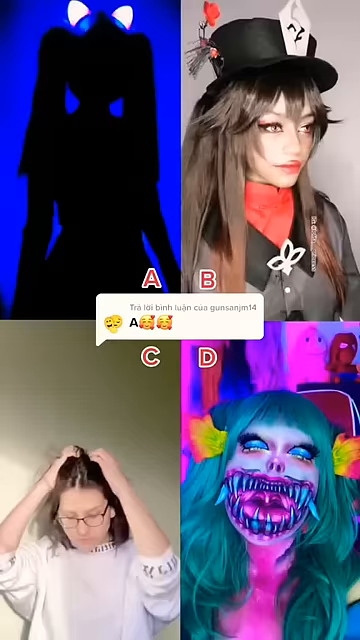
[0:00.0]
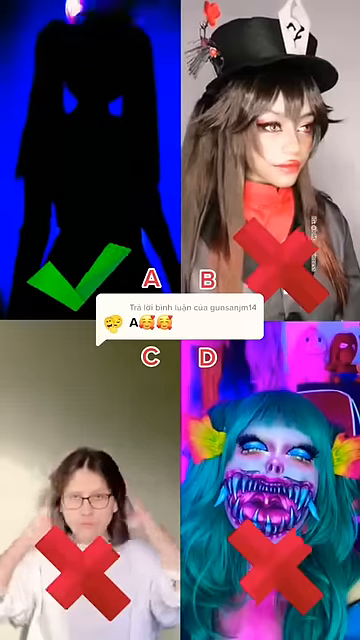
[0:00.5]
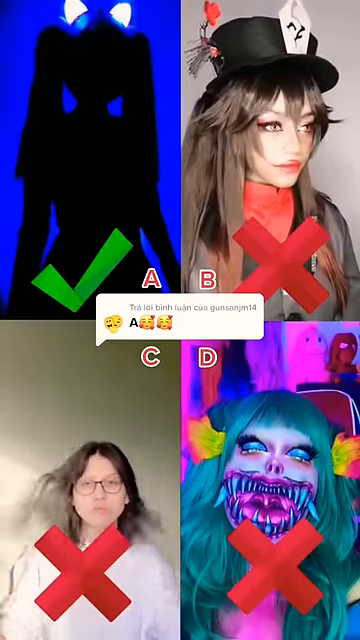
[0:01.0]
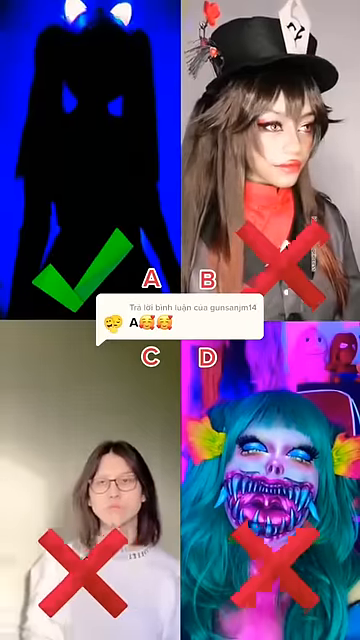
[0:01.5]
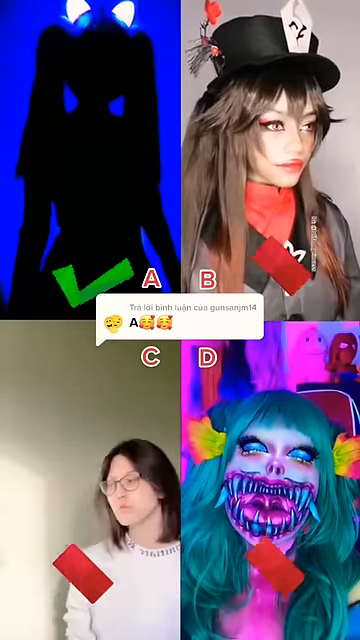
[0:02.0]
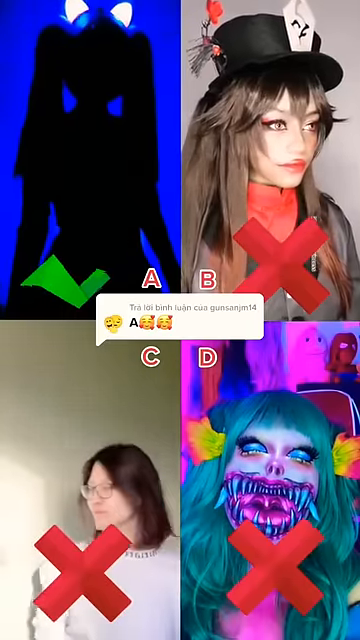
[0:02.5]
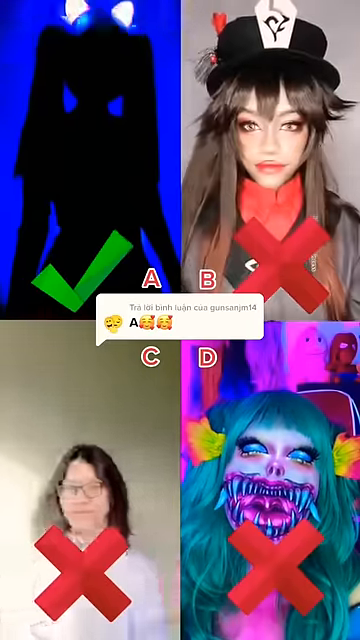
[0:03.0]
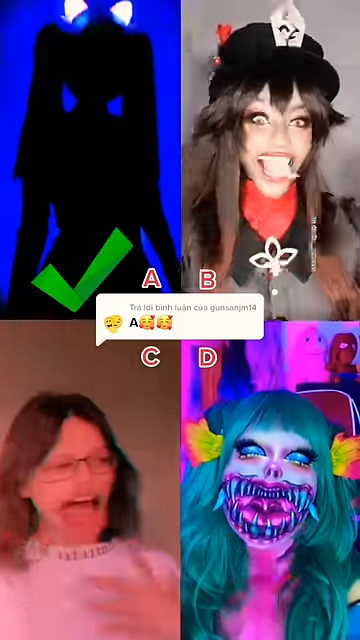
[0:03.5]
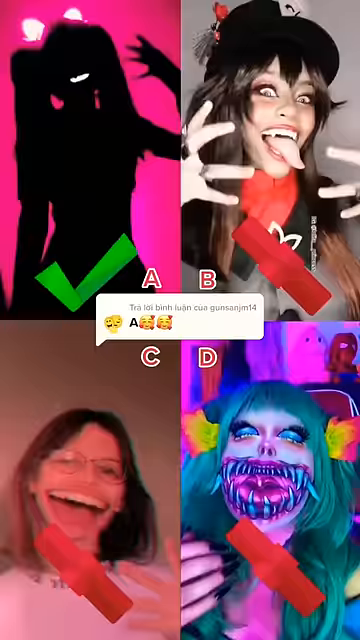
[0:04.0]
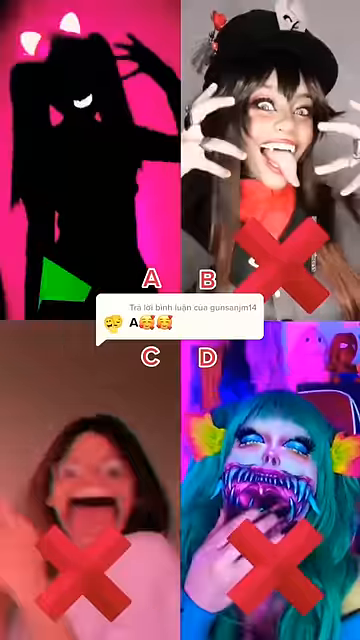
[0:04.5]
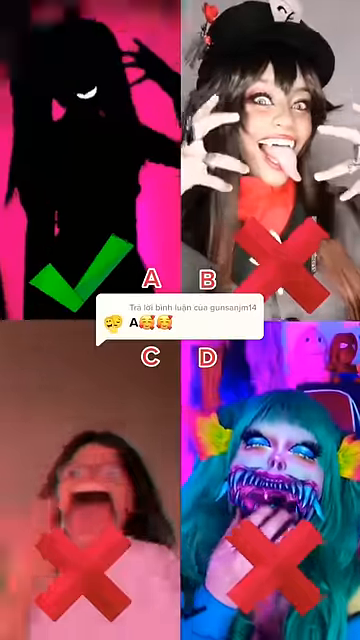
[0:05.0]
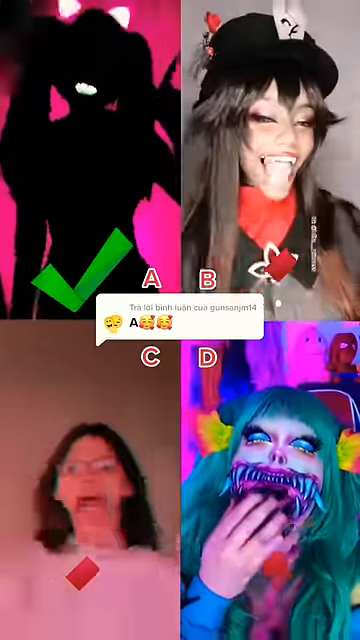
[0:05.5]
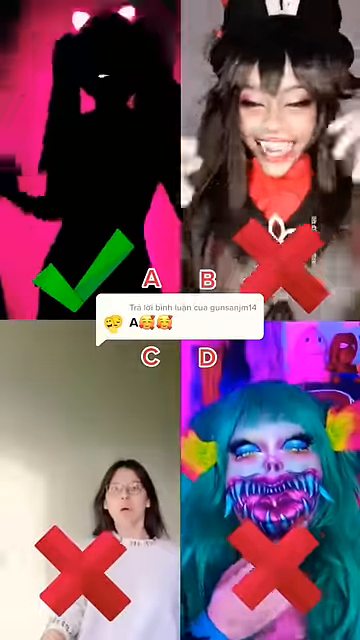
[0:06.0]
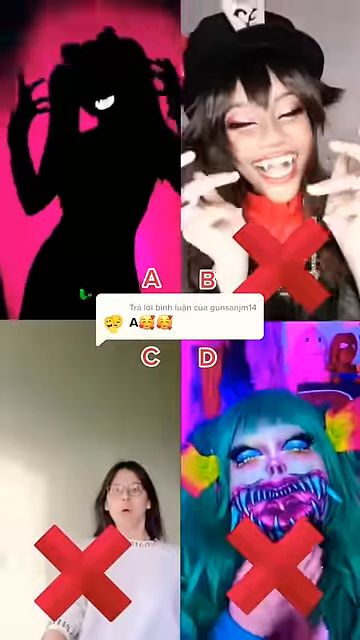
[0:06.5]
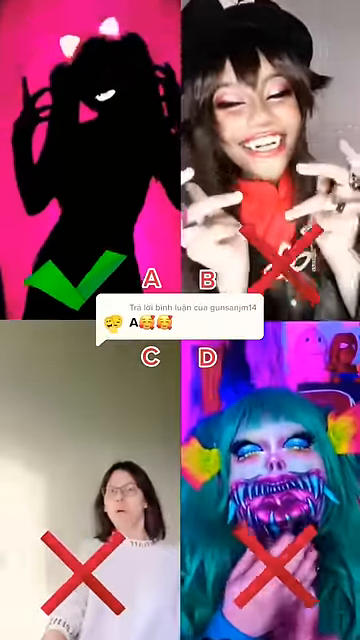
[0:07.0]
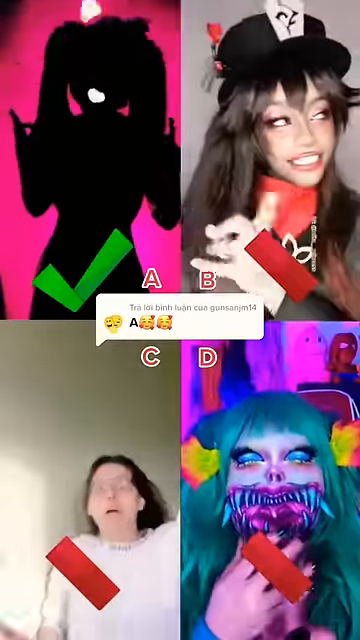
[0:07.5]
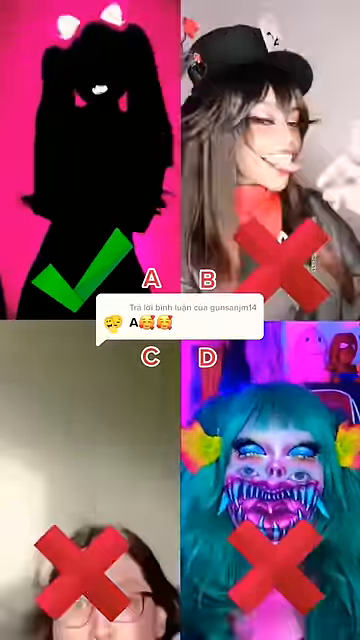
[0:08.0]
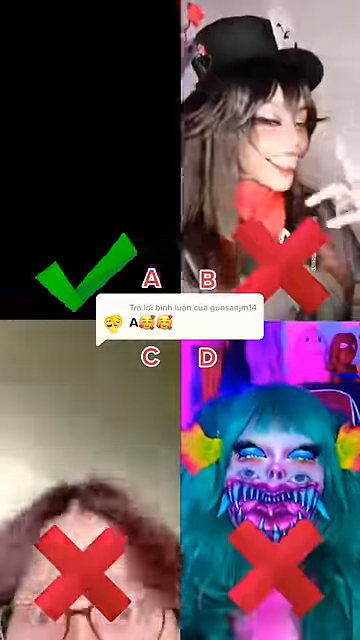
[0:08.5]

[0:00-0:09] Four people, or perhaps four things, appear on screen in a vertical phone-style format, so it looks like a YouTube short. In the top left is someone in cosplay with very long twin tails, making a really evil expression. Her left hand is raised kind of toward her face, while her other hand is kind of down and toward her. She wears a lit-up bow on her head. Only her overall body features and her mouth are visible; the mouth looks like a closed, clenched-teeth grin. In the top right, a lady is fully visible, wearing a black top hat, with a very long tongue and vampire-like teeth; there is an X below her. In the bottom left, a girl transitions from a normal-looking girl to a really bloated-out girl, then to a bloated-out girl who looks almost like an anime character, with big eyes and a big mouth, and the image becomes a bit dimmer. In the bottom right, a girl with blue hair has yellow and red leaves on the sides of her hair and a sort of painted-on mouth that is open.